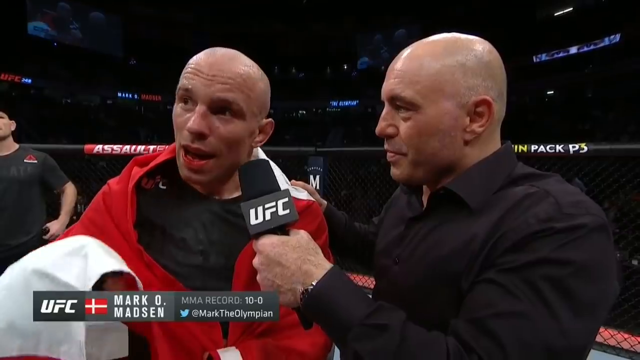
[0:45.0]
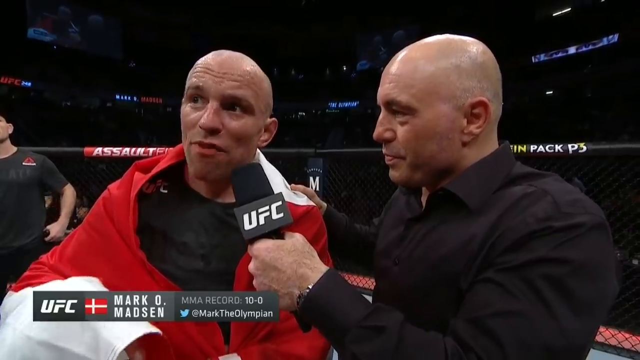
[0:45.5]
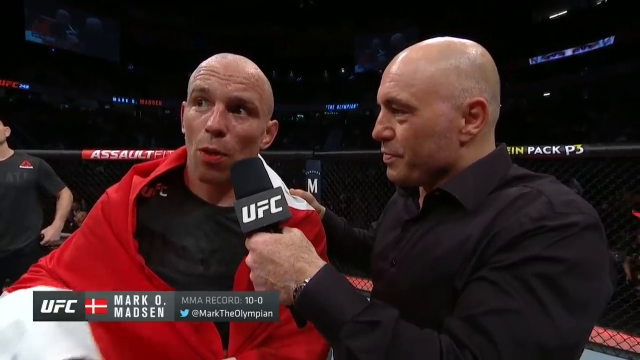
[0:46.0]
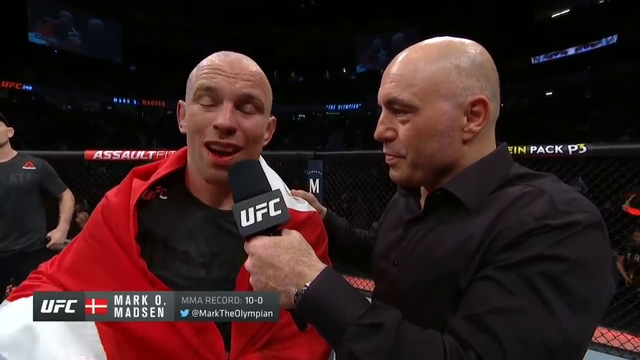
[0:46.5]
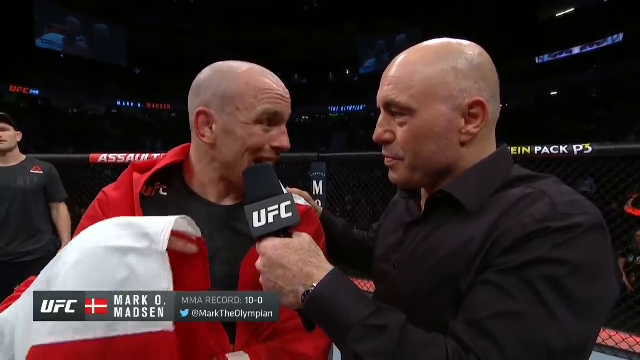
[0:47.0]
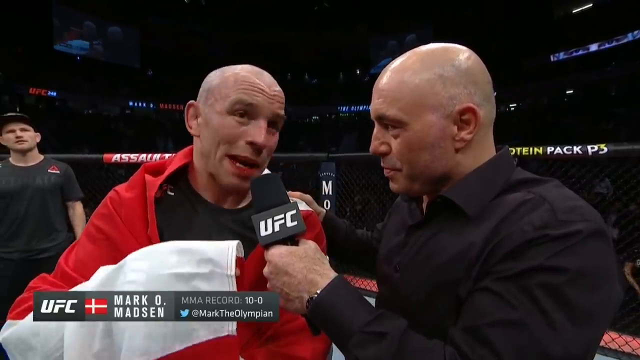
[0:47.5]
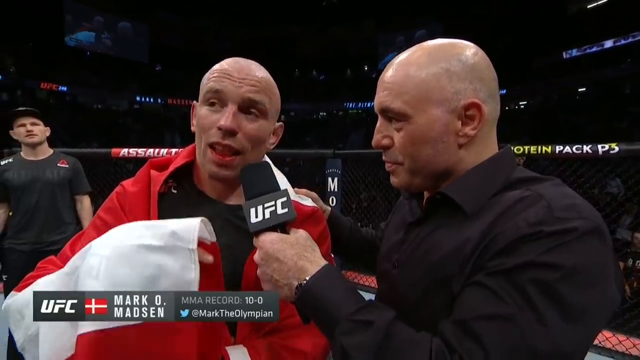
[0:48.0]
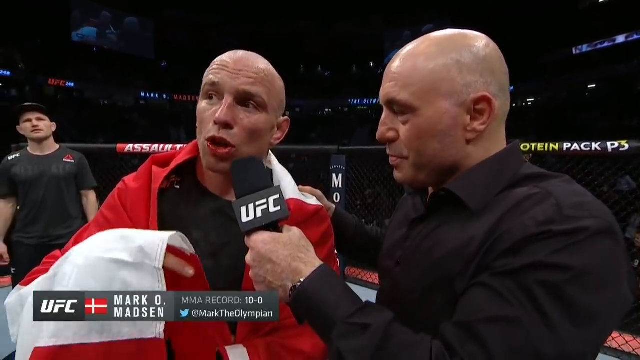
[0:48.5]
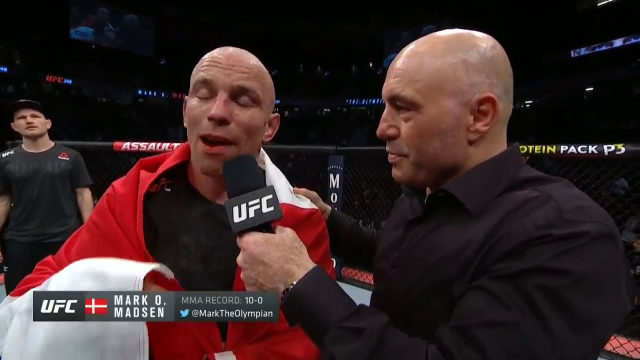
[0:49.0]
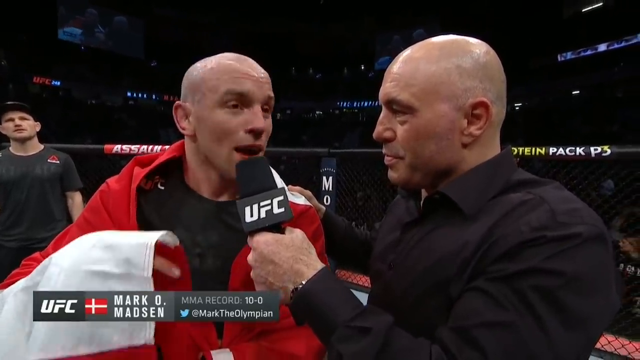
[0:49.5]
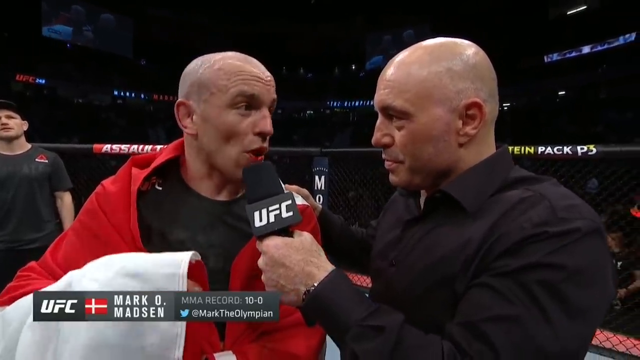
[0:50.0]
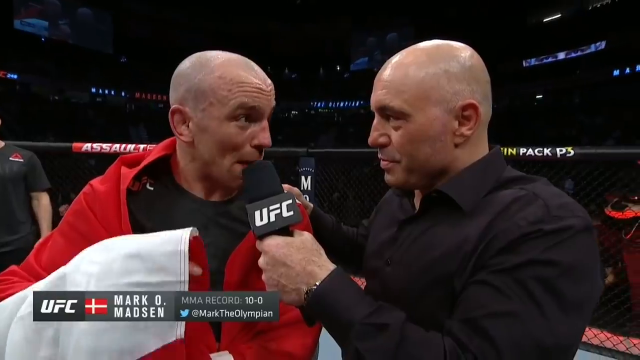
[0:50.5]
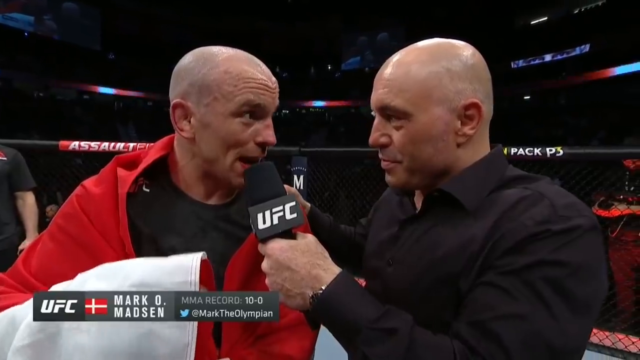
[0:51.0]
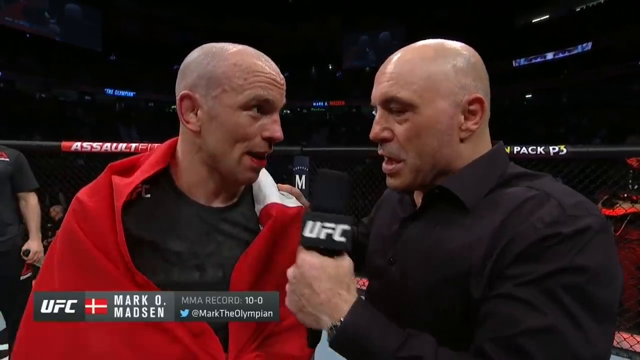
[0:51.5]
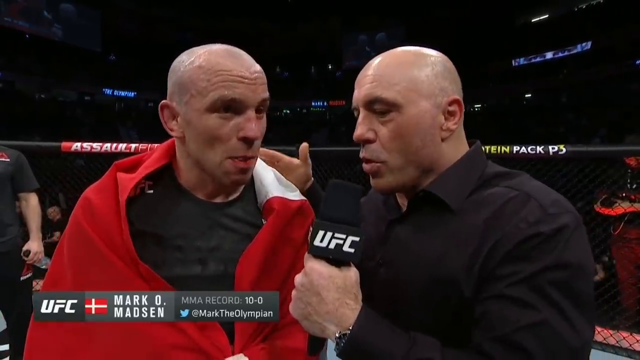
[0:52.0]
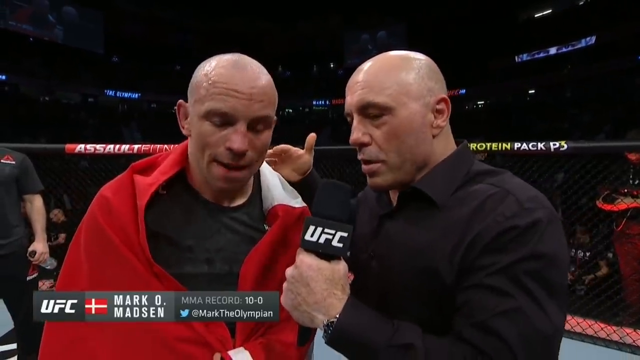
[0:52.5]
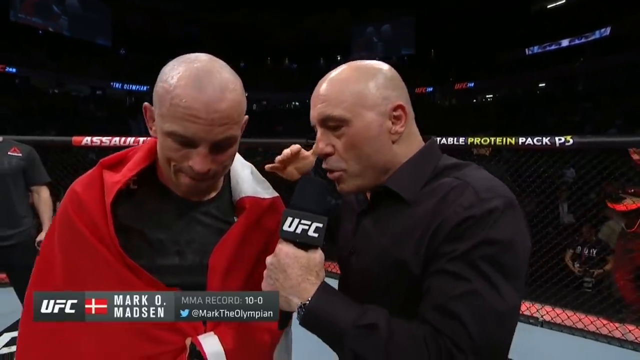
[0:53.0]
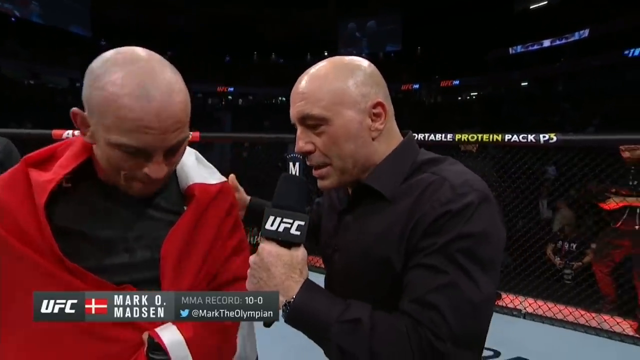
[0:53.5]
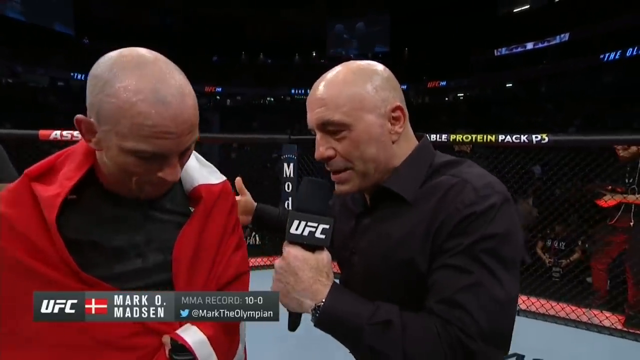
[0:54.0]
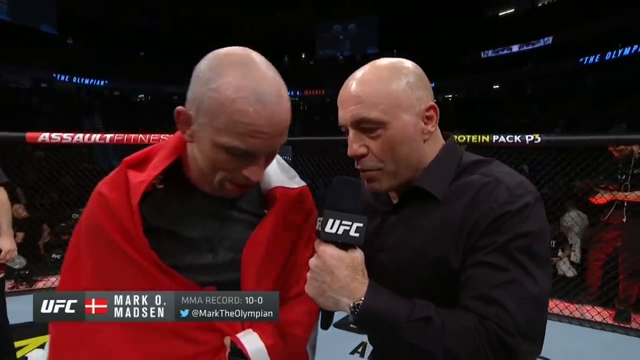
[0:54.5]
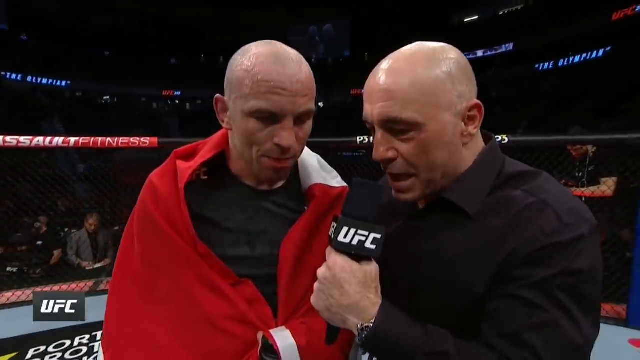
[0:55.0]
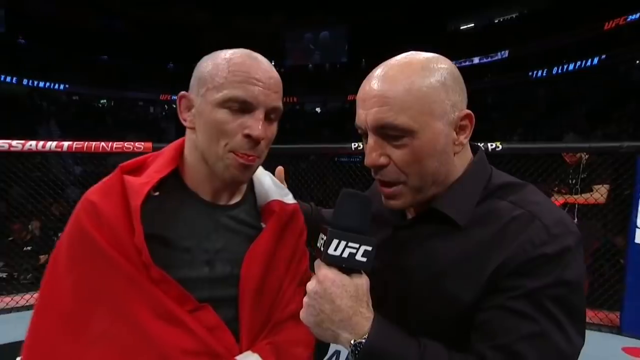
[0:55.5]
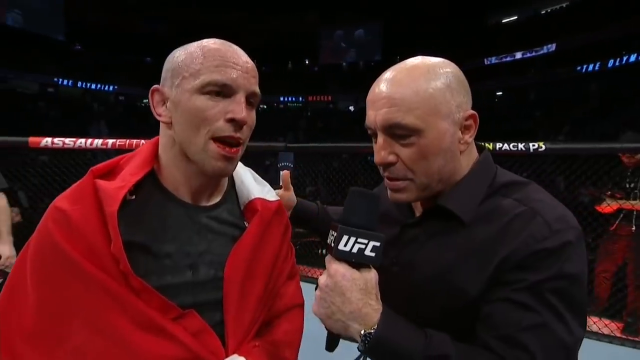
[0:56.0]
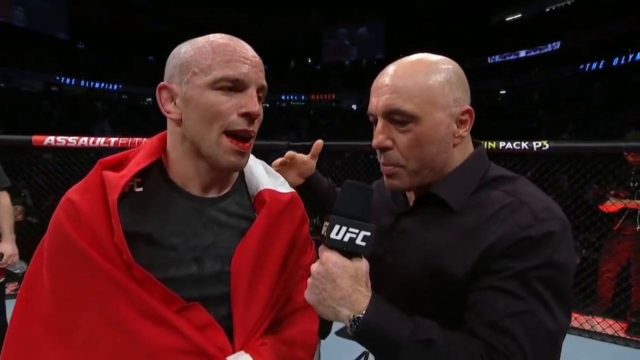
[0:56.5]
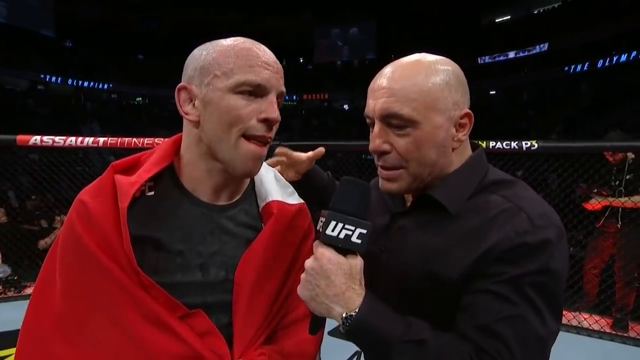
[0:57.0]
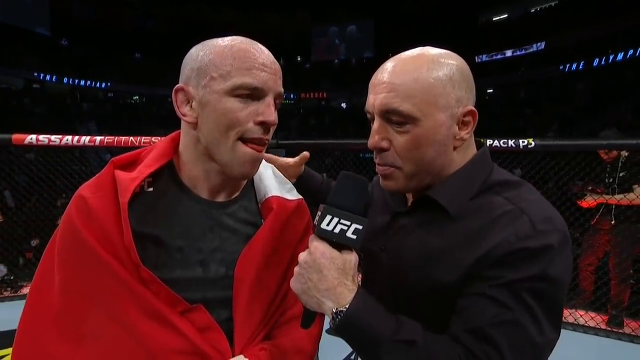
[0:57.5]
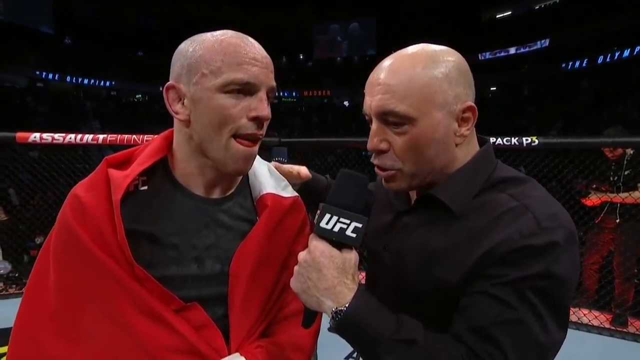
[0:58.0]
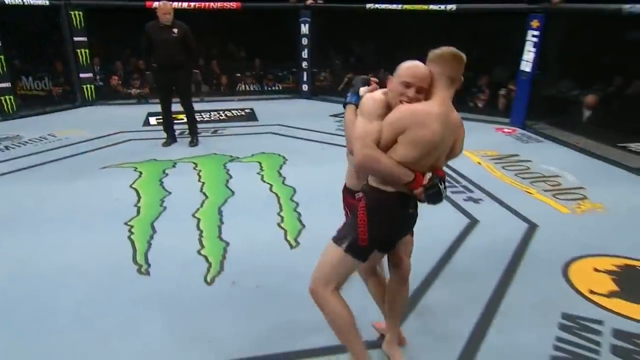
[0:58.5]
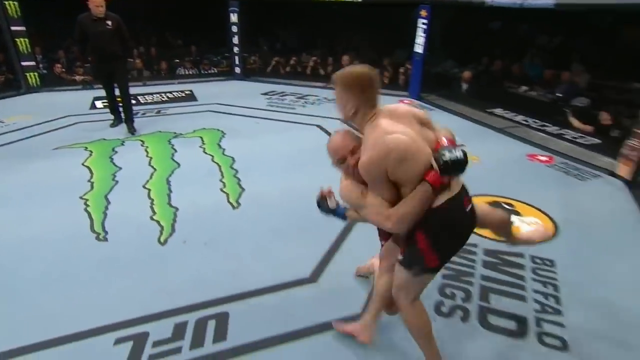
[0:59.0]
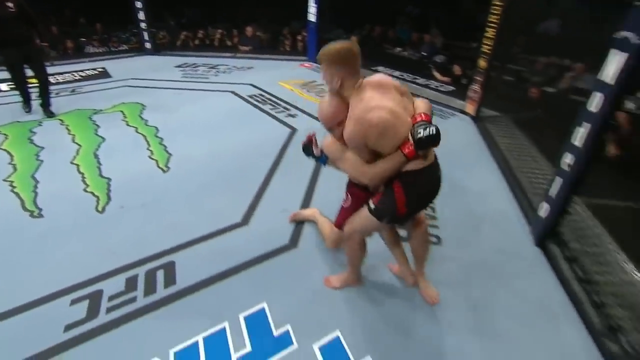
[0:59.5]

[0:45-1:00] The interview continues, with Madsen speaking articulately and still answering with his hands while Rogan holds the mic up to him in his left hand. Rogan finally takes his hand off Madsen's left shoulder and starts asking another question, and the video cuts to a highlight. Briefly, at the very end, Madsen and the other fighter are locked at the hips, with Madsen trying to push the other combatant against the cage. Graphics appear during this section showing Mark Madsen's MMA record as 10-0 and his Twitter handle, and the UFC watermark logo remains in the bottom right corner.